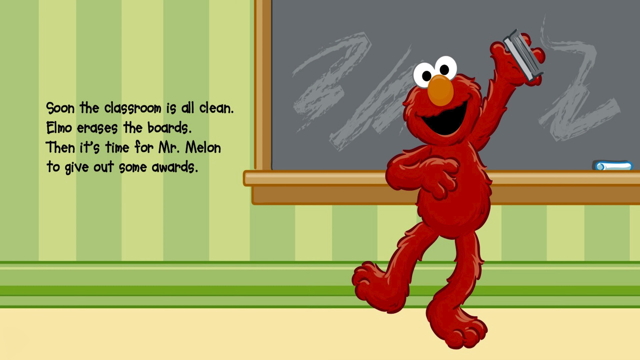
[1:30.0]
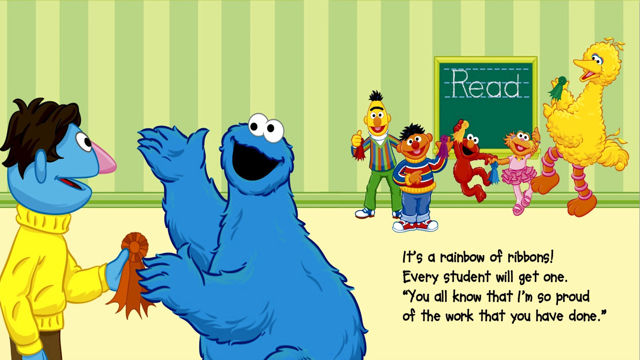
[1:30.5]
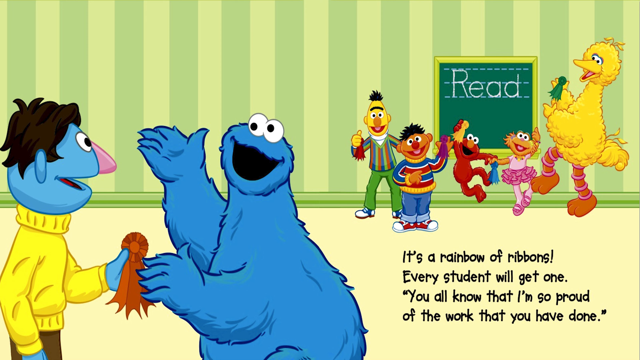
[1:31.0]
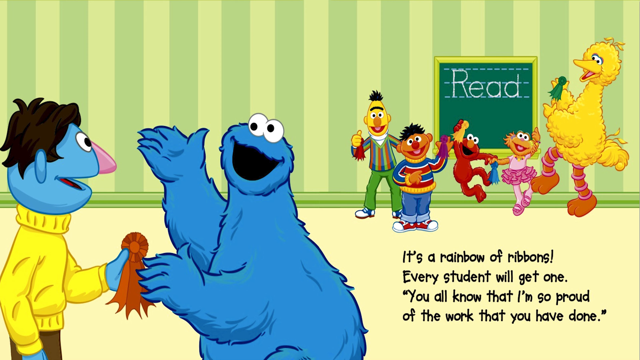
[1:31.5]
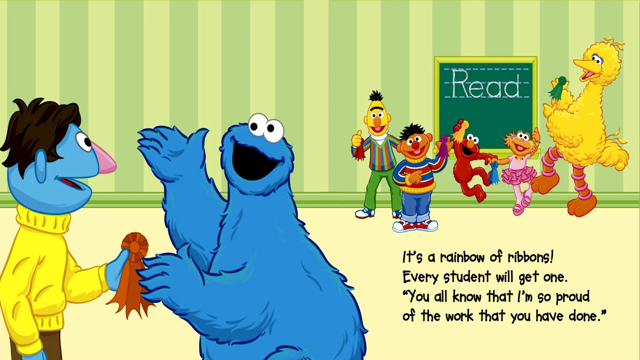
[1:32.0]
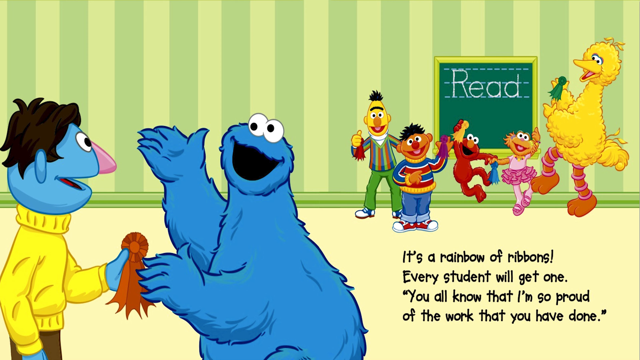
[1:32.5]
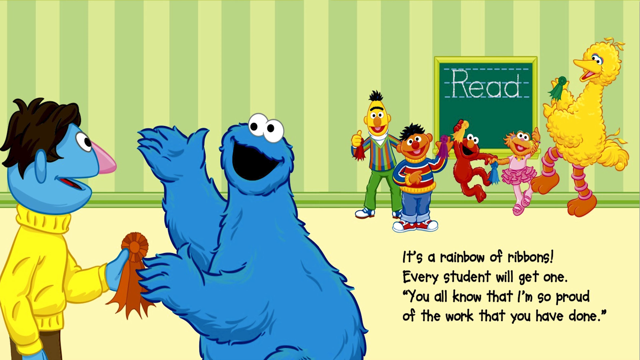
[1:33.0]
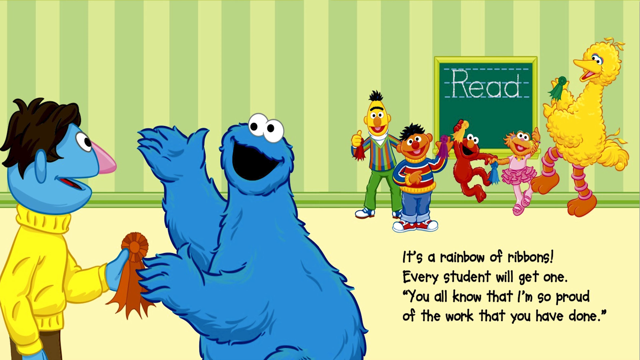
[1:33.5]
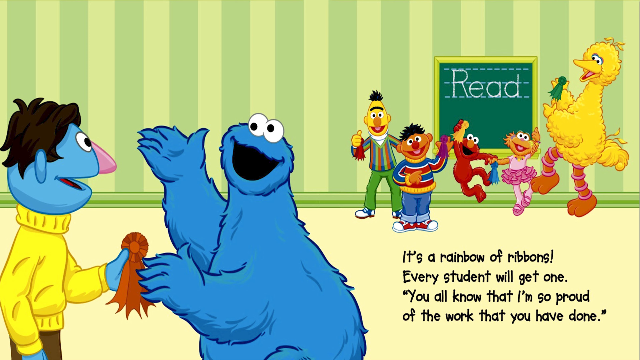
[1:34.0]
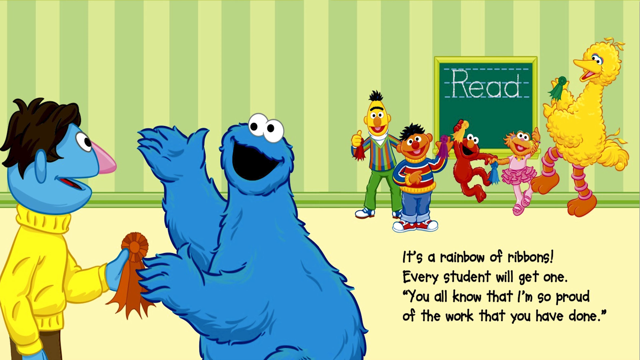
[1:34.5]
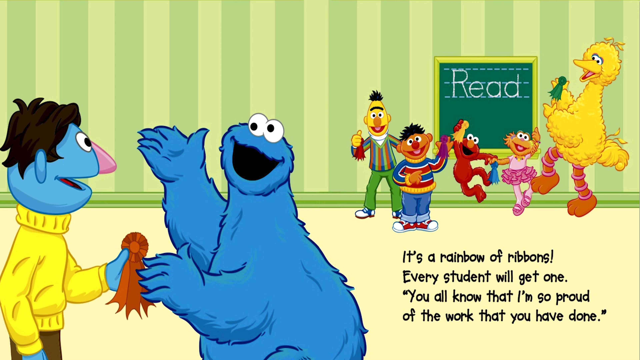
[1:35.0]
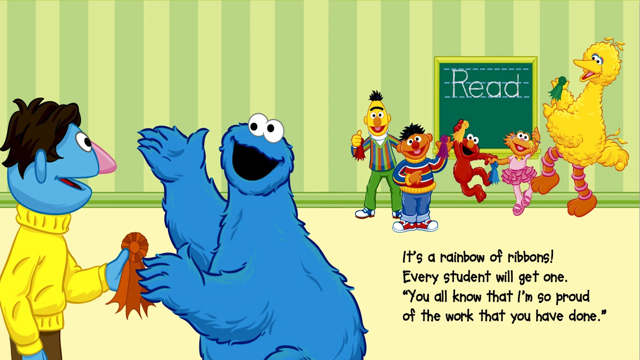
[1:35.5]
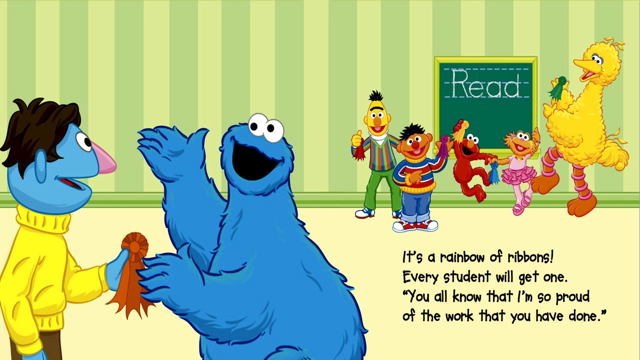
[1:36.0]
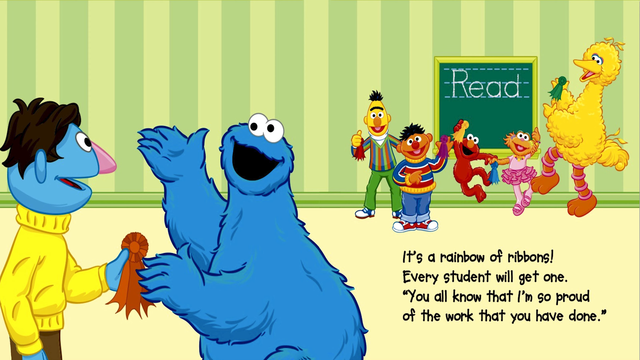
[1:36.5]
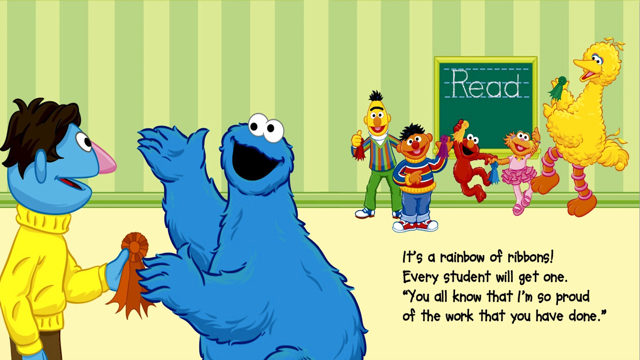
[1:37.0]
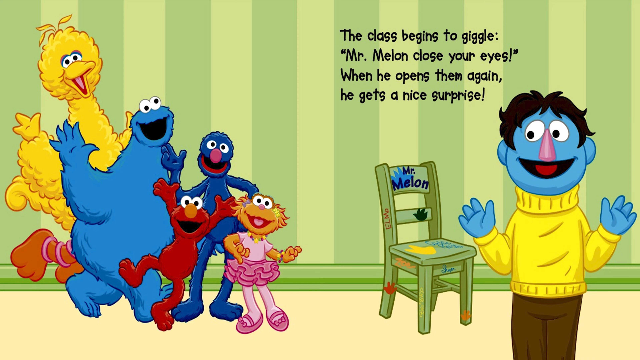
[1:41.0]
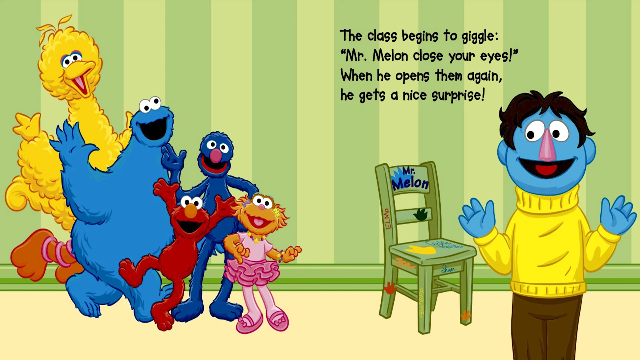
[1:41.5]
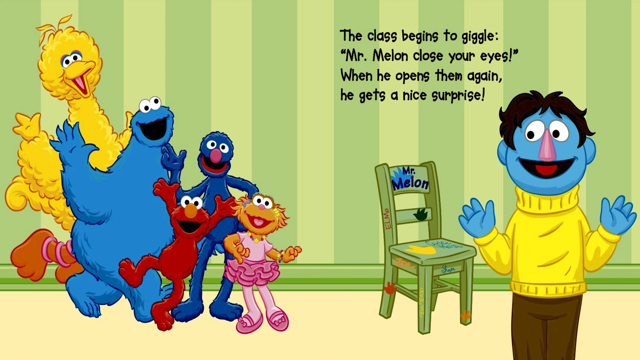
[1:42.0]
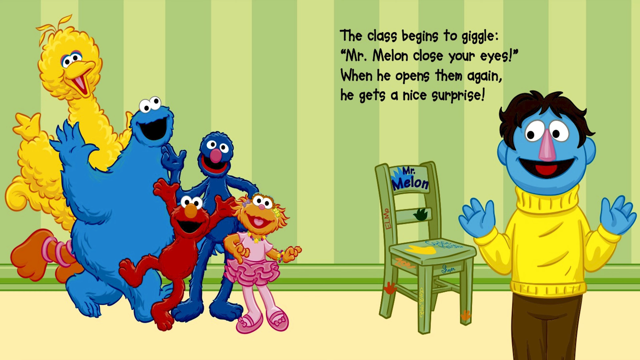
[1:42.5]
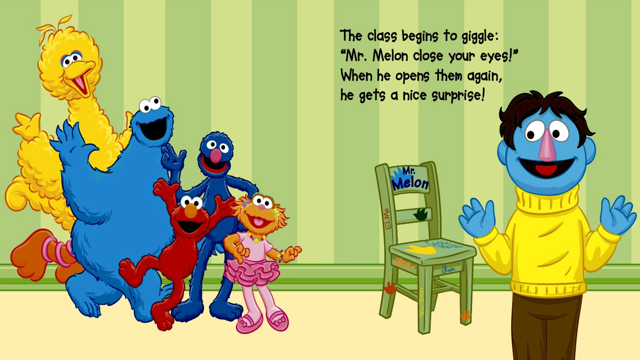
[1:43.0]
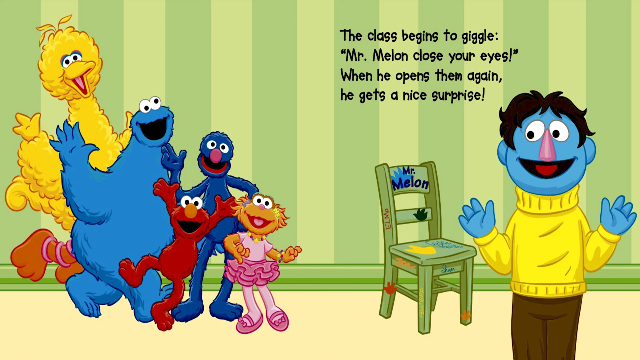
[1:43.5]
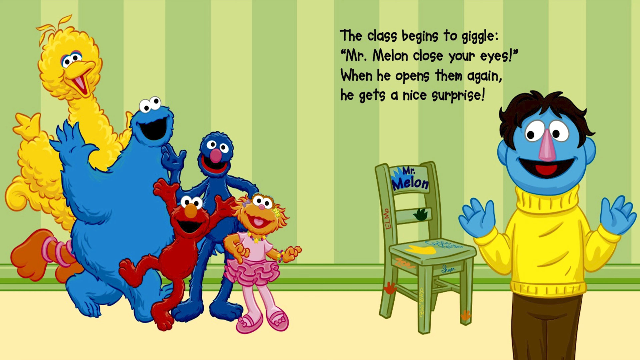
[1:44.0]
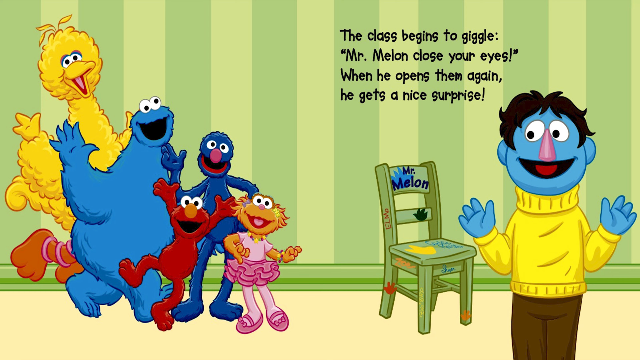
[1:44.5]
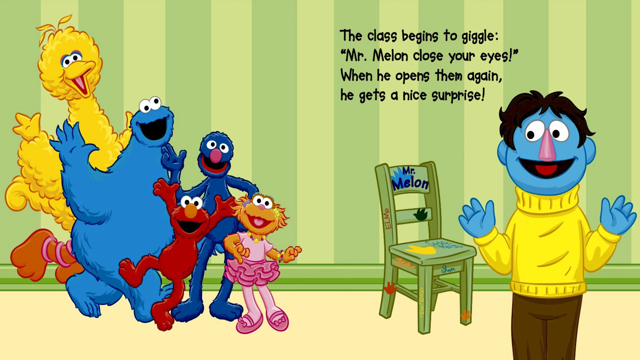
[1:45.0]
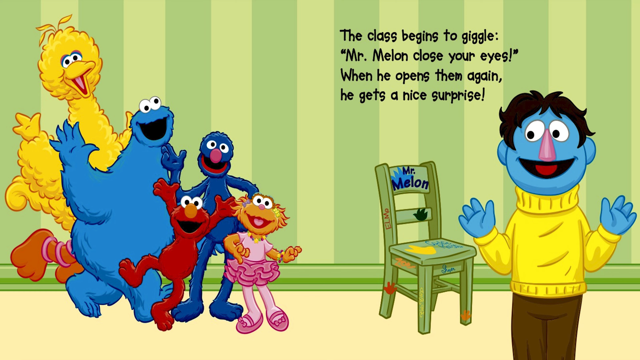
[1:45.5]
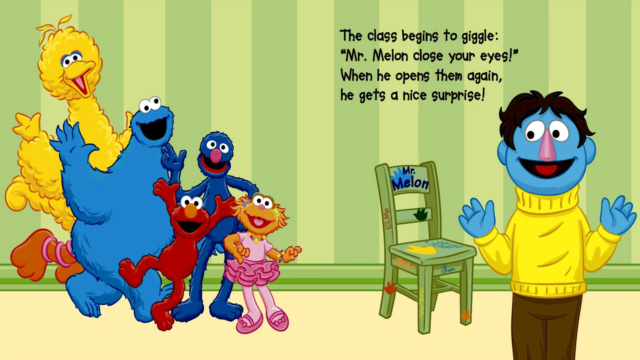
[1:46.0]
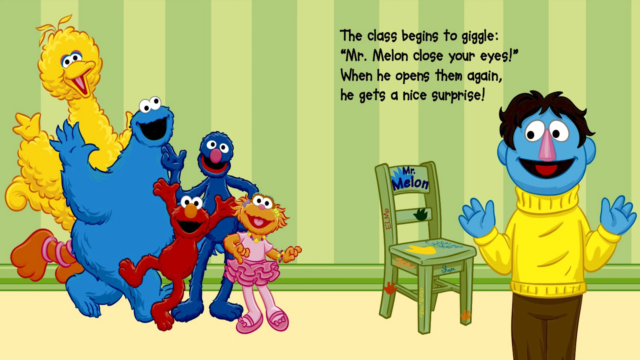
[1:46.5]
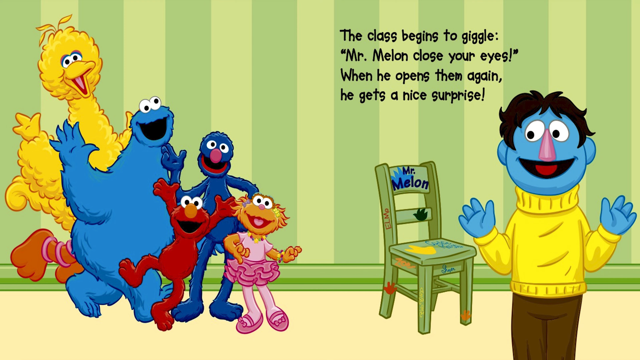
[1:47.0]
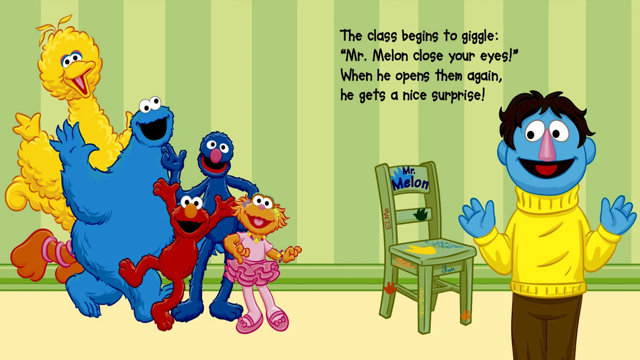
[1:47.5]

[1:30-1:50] Elmo, a red furry monster, is smiling and looks happy and proud of himself. Smudges of the chalk he has just erased are visible, so the board does not look entirely clean. Text says "Soon the classroom is all clean. Elmo erases the boards. Then it's time for Mr. Mellon to give out some awards." Mr. Mellon is the teacher in the classroom. The chalkboard is black and matches the black eraser, and its frame is light brown, possibly tan. The wall the chalkboard rests on is two different shades of green.